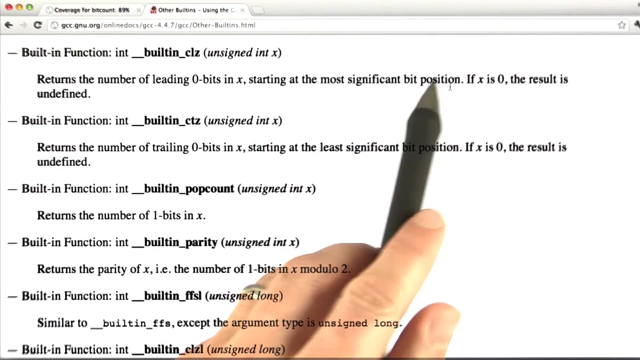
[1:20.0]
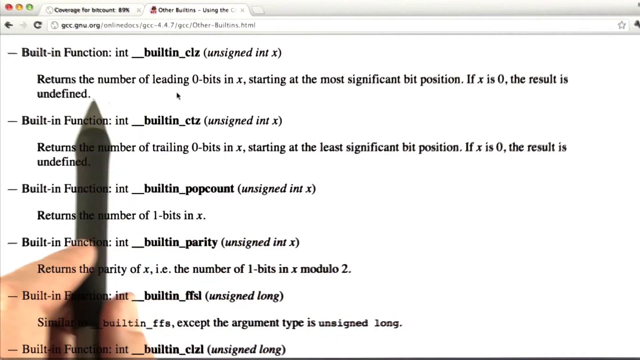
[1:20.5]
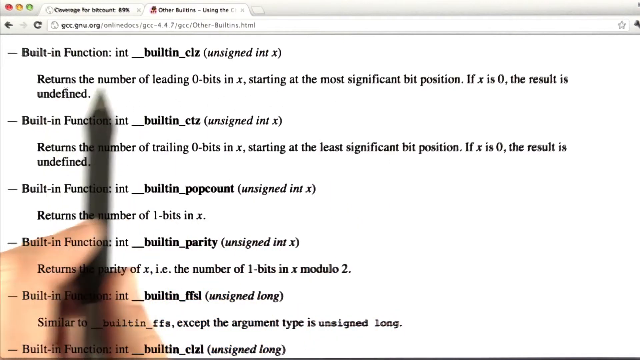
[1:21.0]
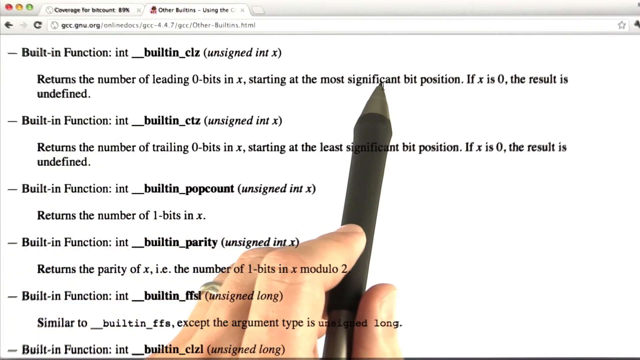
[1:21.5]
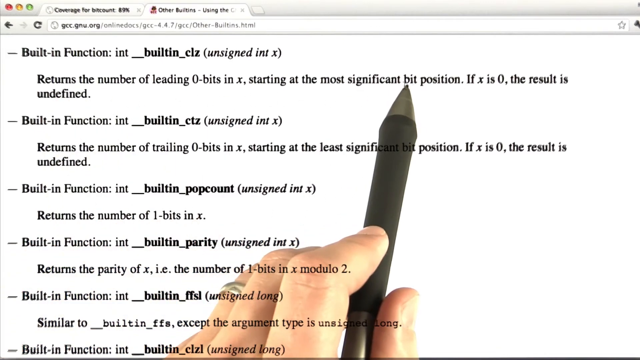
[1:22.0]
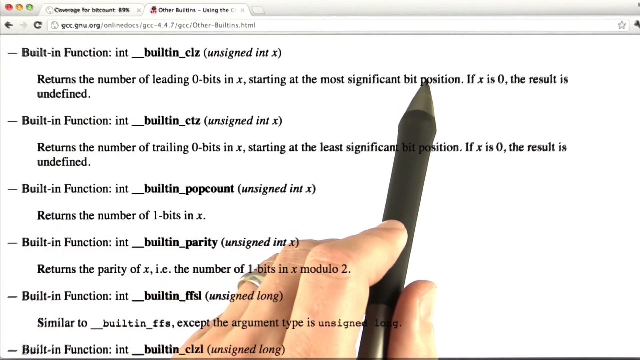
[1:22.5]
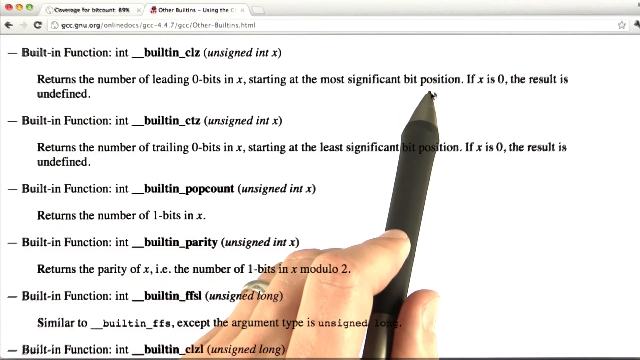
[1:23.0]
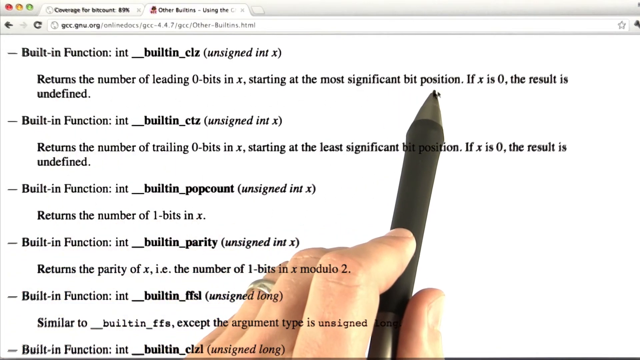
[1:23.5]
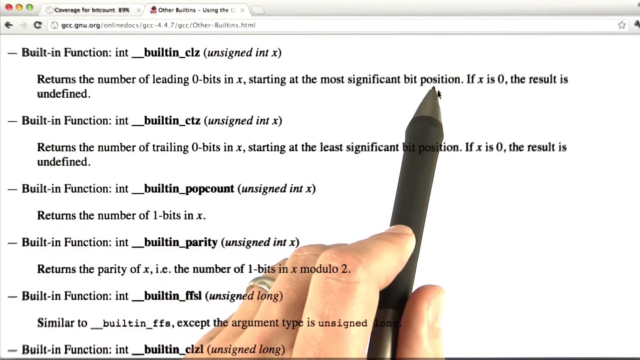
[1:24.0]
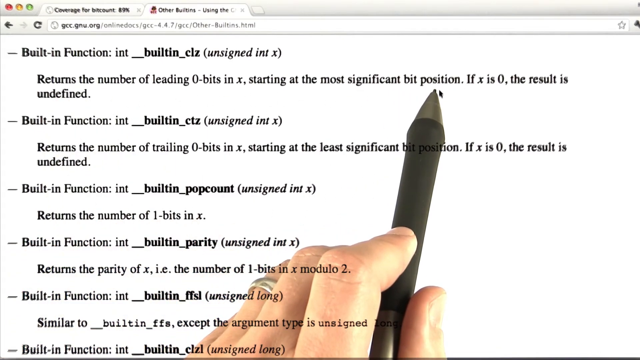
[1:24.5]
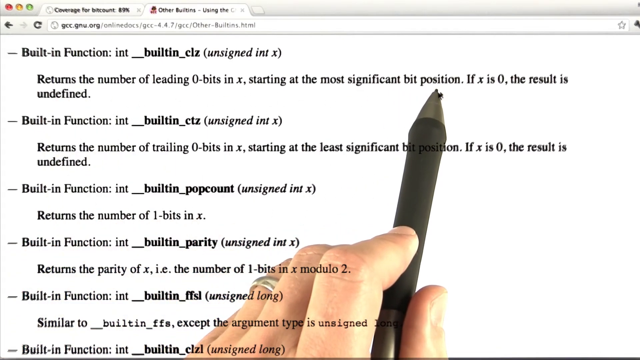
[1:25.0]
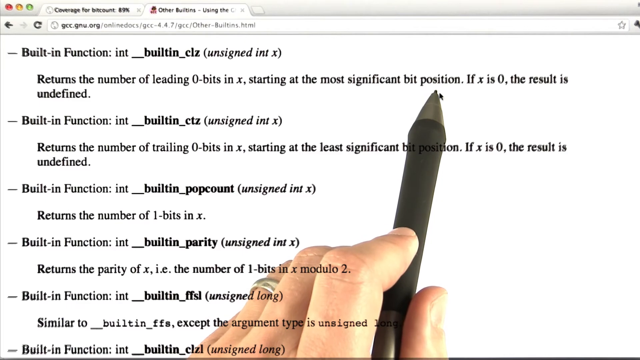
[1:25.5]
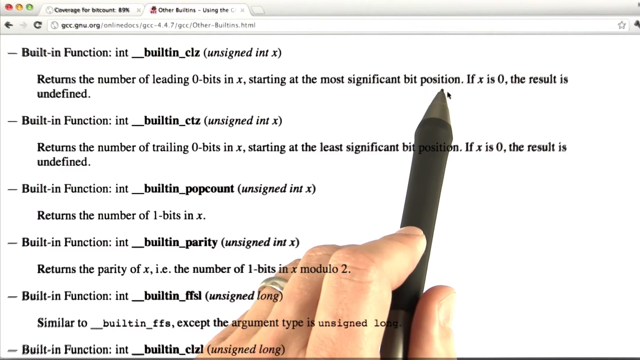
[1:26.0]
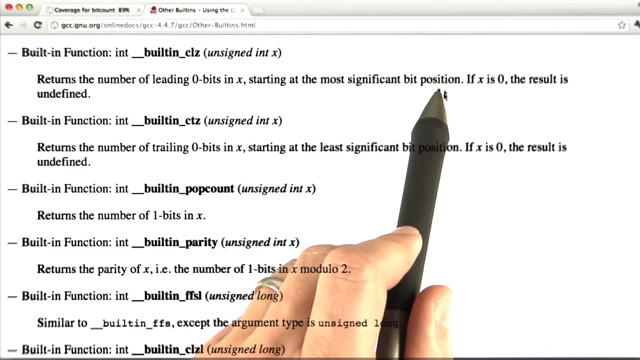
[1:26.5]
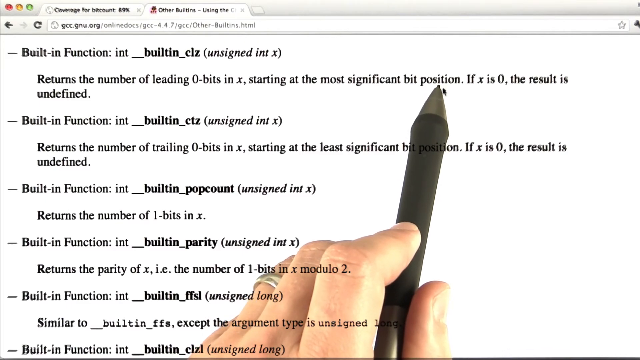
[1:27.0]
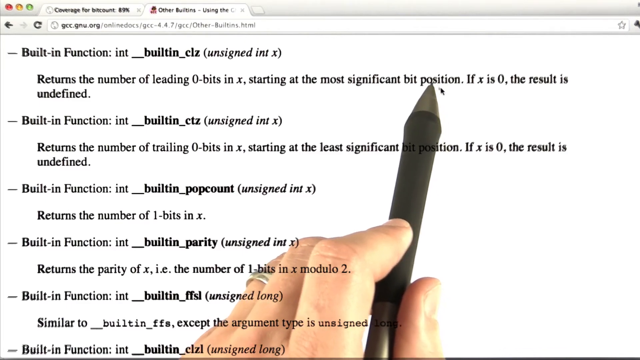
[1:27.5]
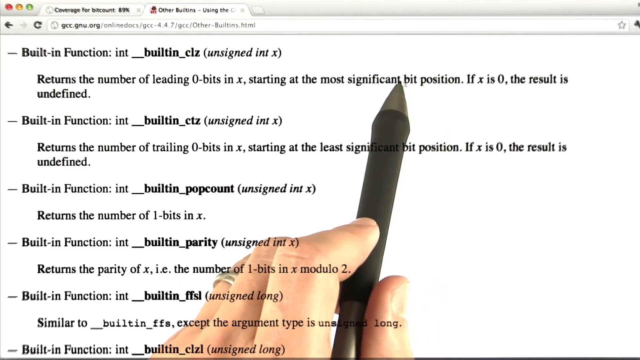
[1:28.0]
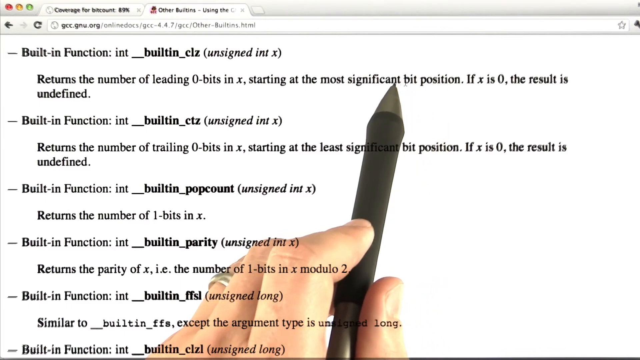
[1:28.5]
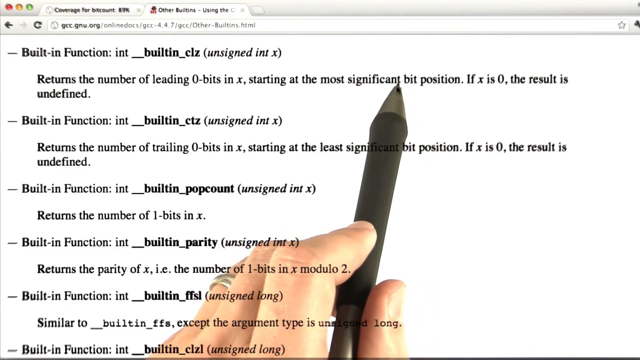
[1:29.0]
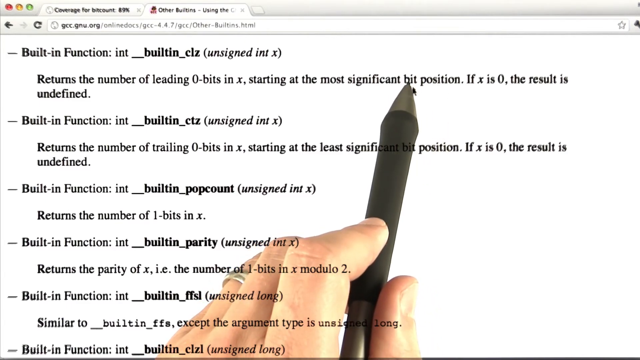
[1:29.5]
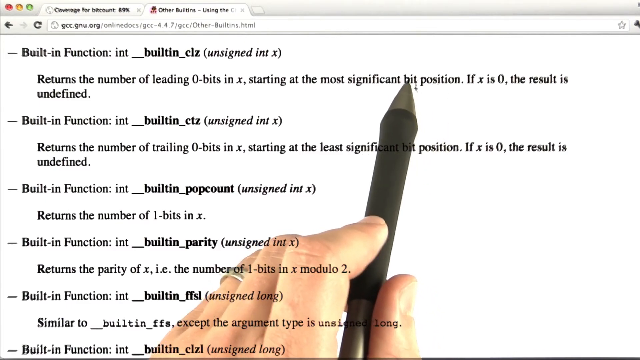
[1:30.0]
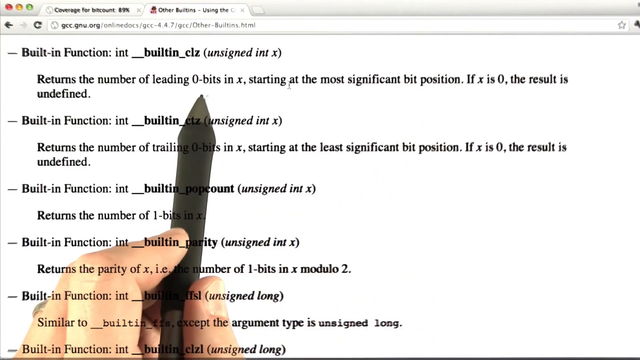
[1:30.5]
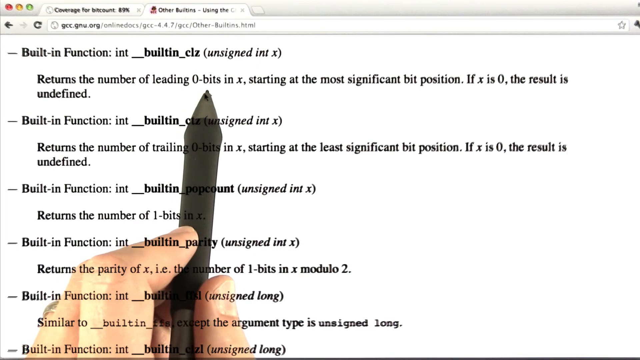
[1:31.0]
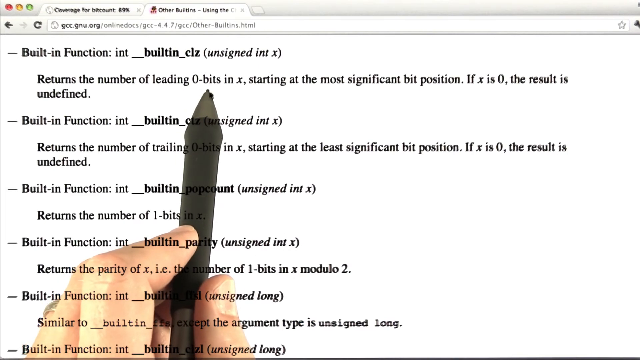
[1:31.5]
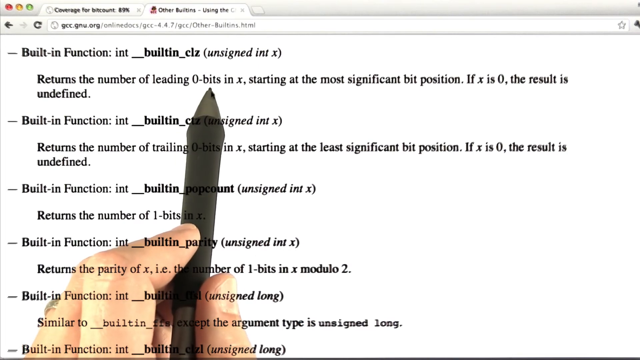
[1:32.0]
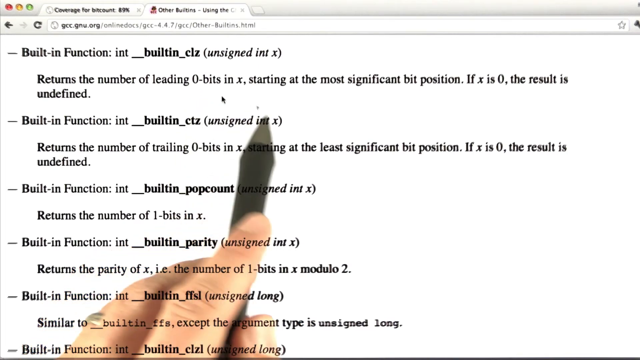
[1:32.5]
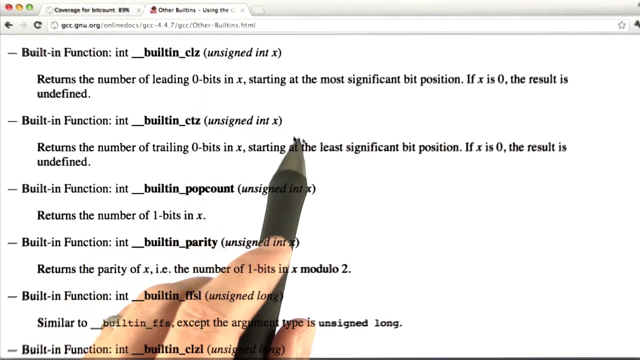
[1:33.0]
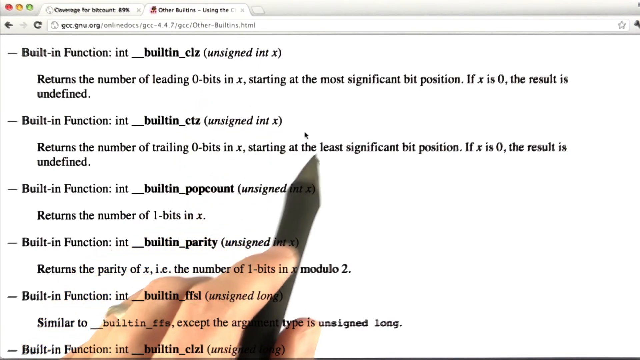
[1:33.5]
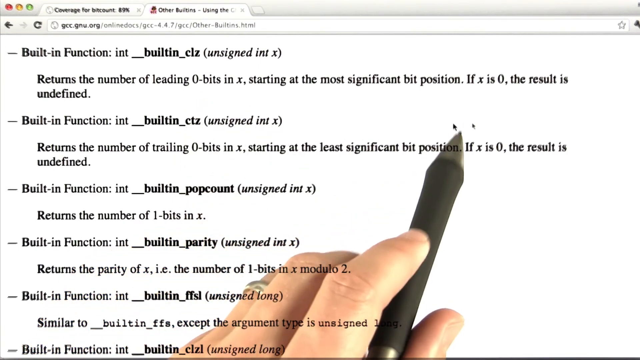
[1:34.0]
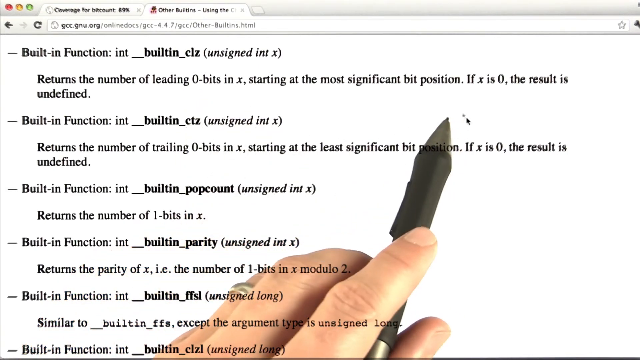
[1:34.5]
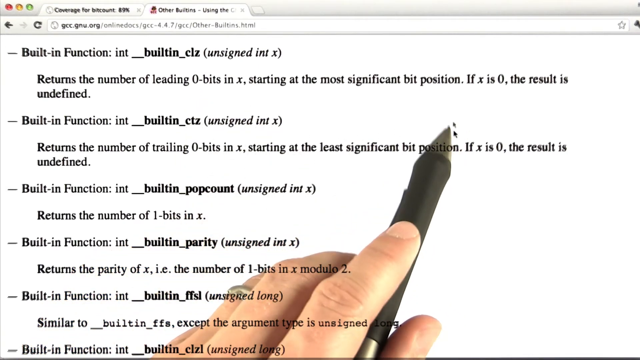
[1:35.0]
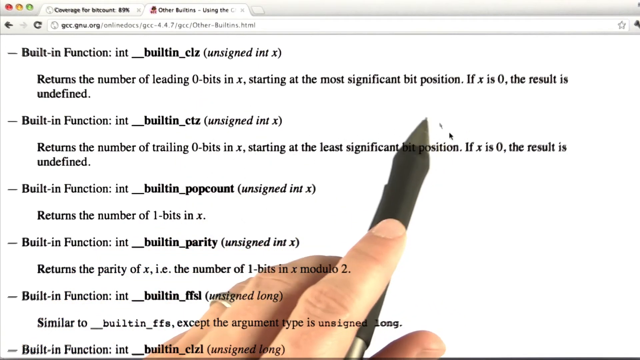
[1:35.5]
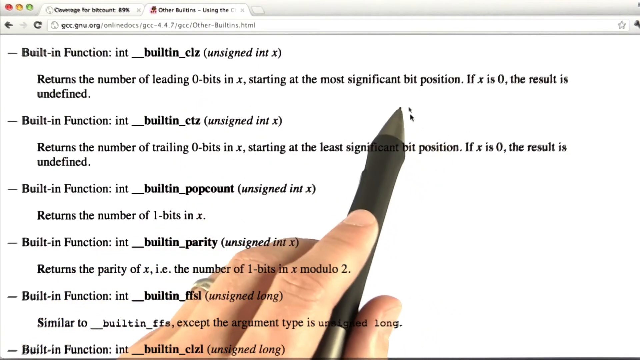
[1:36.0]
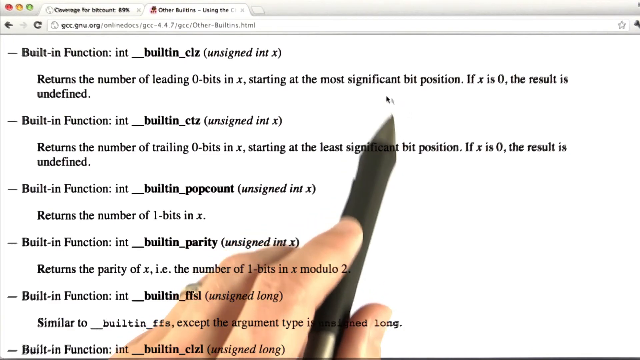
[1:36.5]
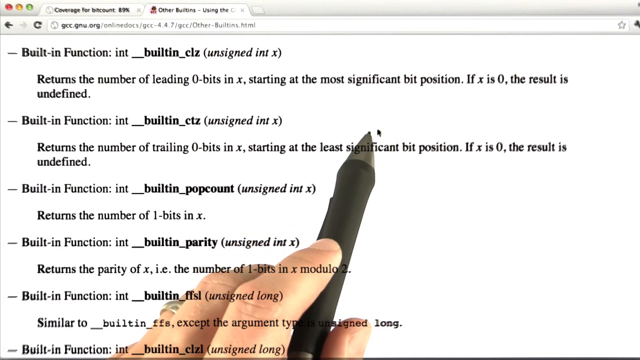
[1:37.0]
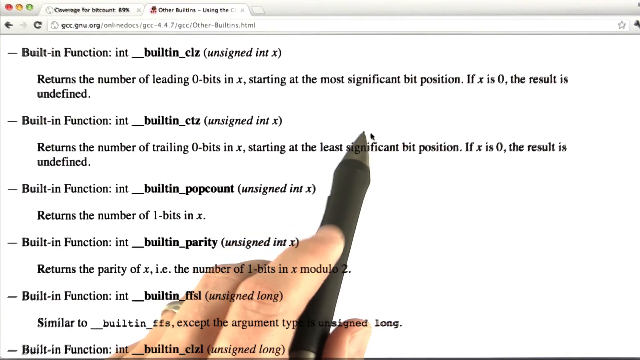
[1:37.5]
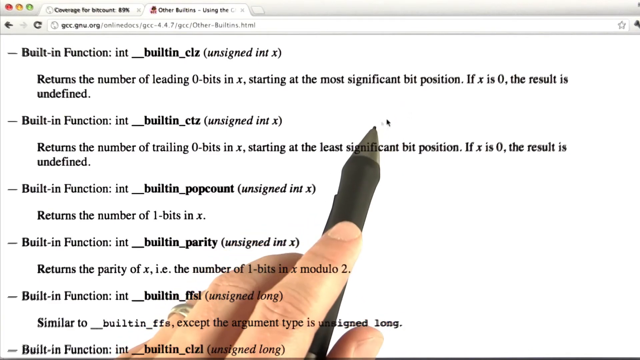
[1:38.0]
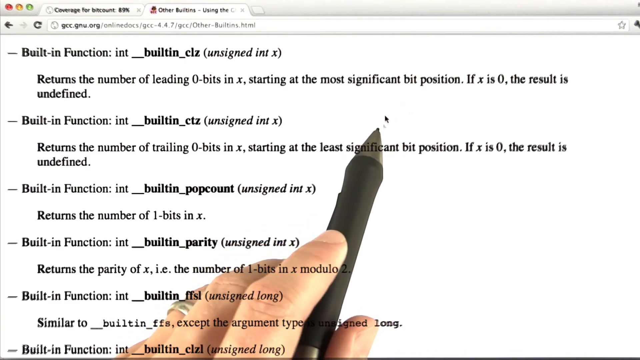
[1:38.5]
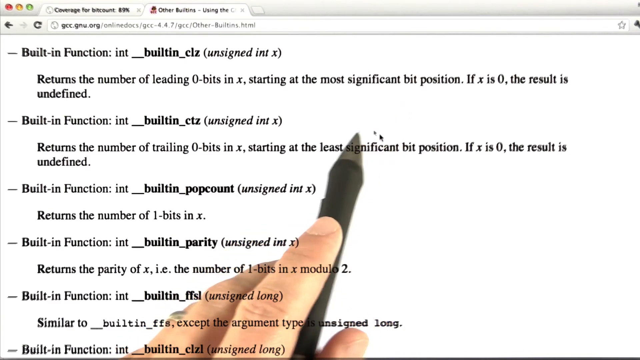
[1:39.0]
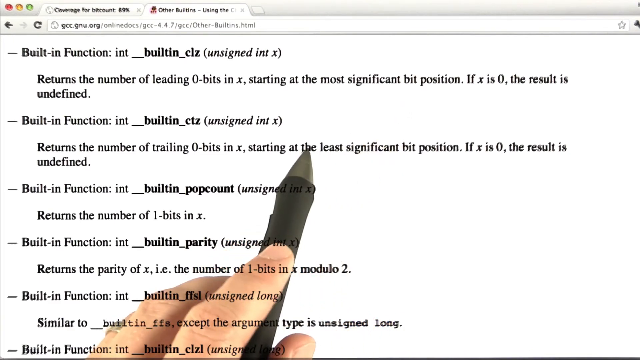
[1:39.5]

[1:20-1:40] An instructor uses a pen stylus as a cursor on a computer screen with a white background. The open file is in the built-ins.html folder, and "built-in functions" appears many times on the screen, showing the built-in functions code. The instructor moves his stylus back and forth, and the arrow of the cursor follows it. He does not make any markings on the screen; he simply points out different lines of code, moving back and forth across the screen.